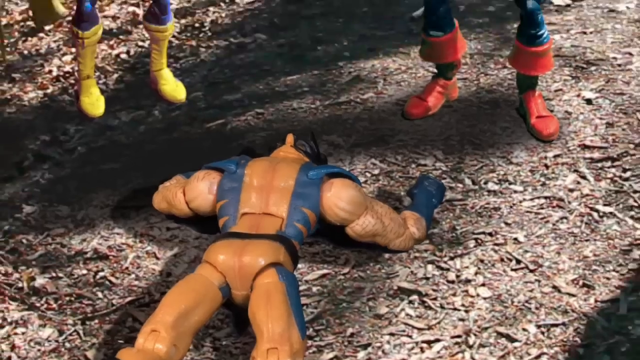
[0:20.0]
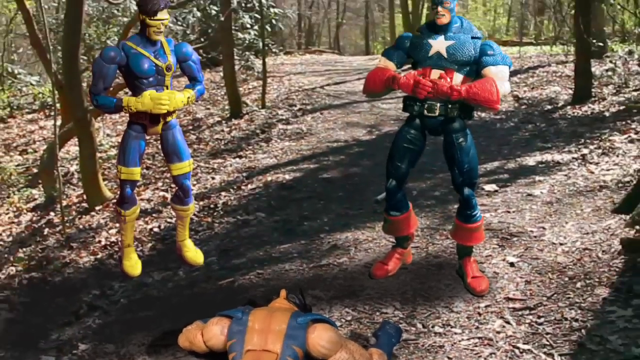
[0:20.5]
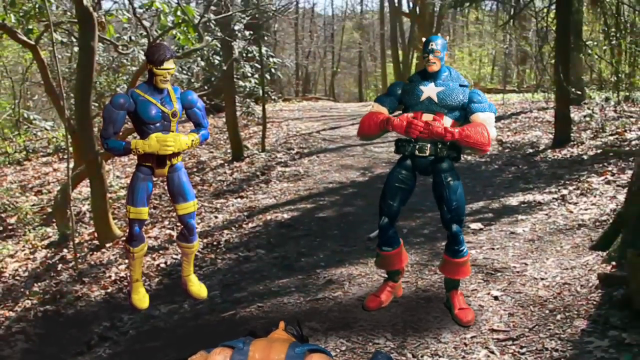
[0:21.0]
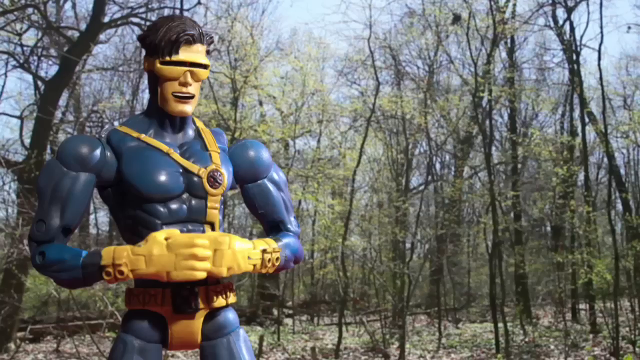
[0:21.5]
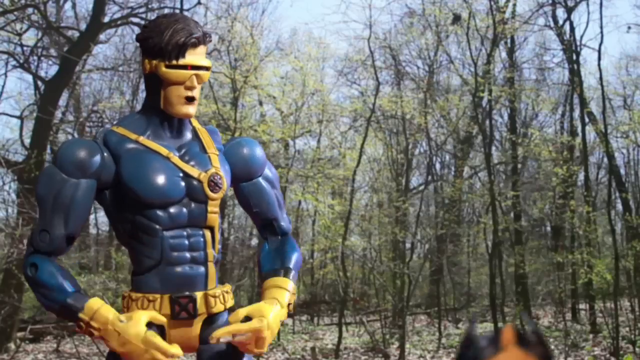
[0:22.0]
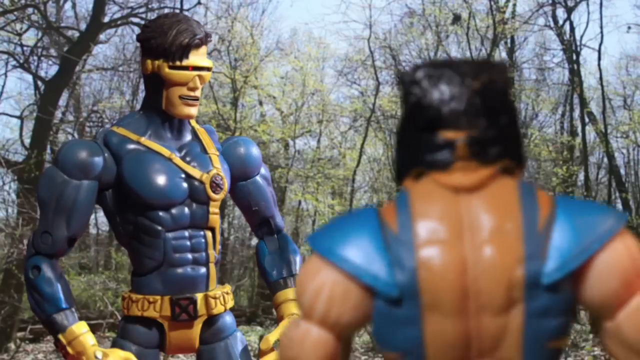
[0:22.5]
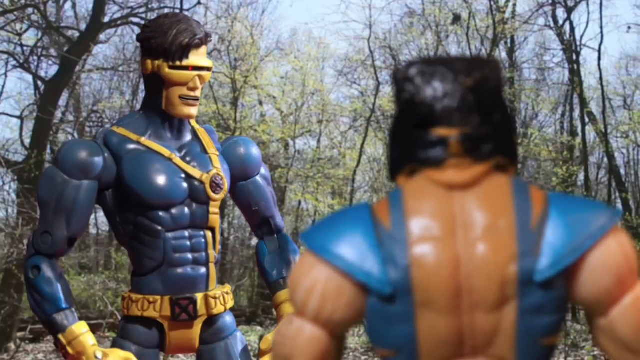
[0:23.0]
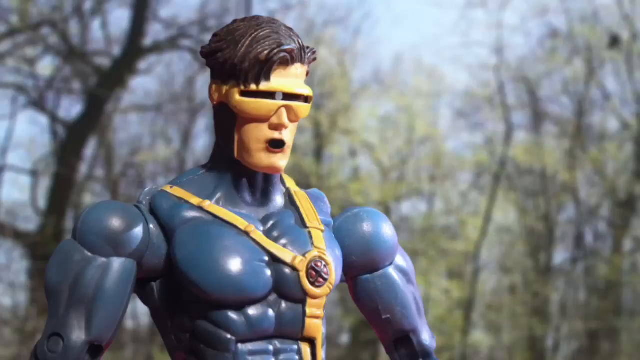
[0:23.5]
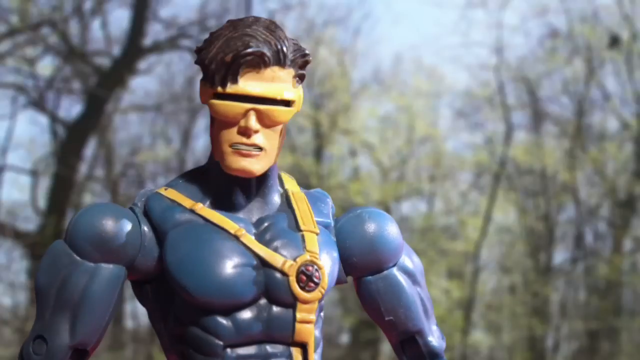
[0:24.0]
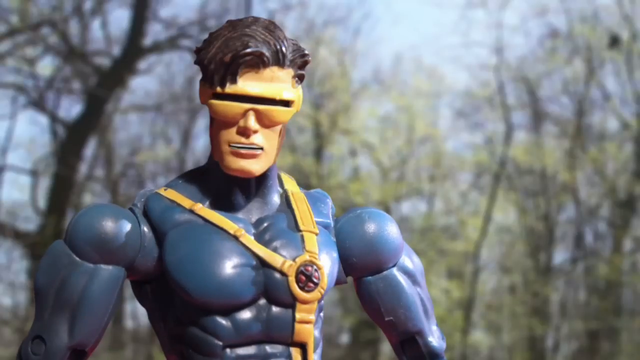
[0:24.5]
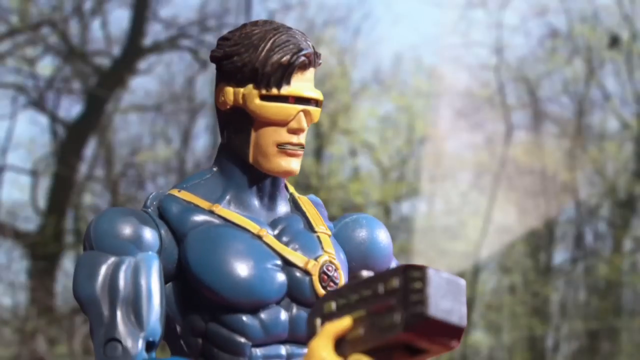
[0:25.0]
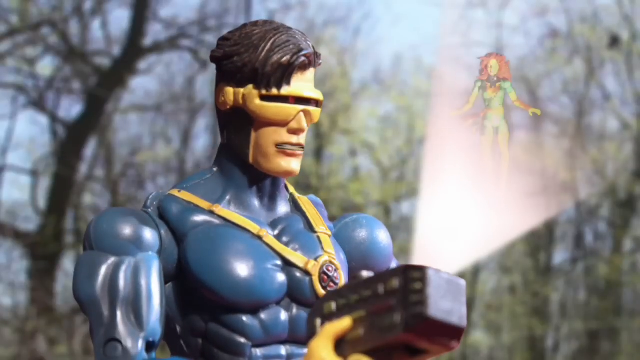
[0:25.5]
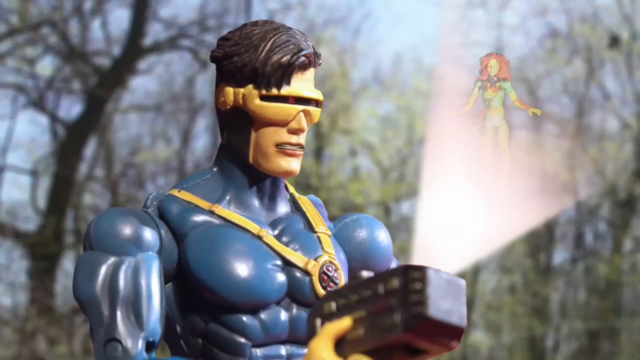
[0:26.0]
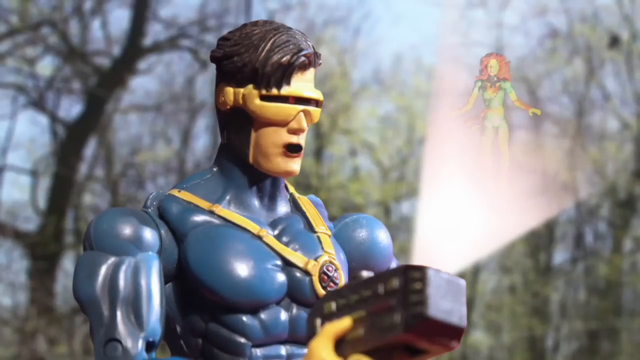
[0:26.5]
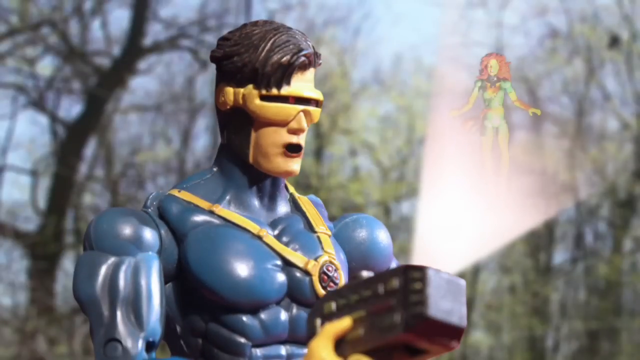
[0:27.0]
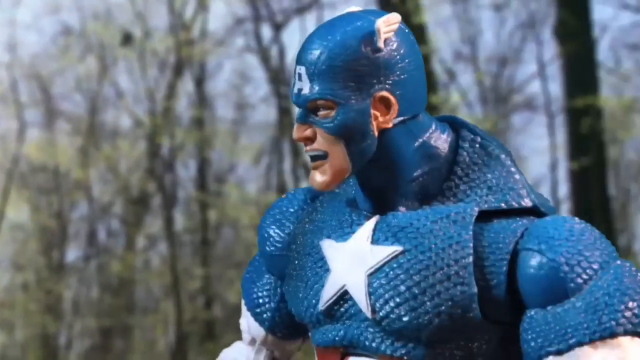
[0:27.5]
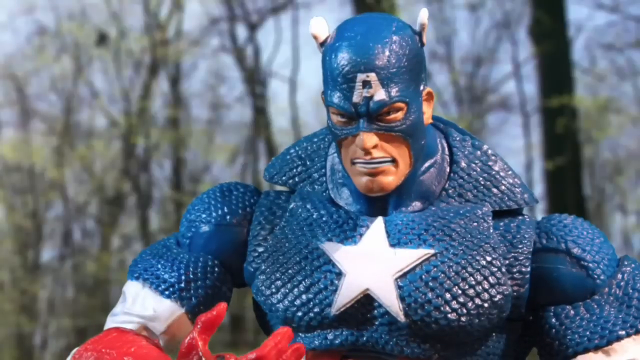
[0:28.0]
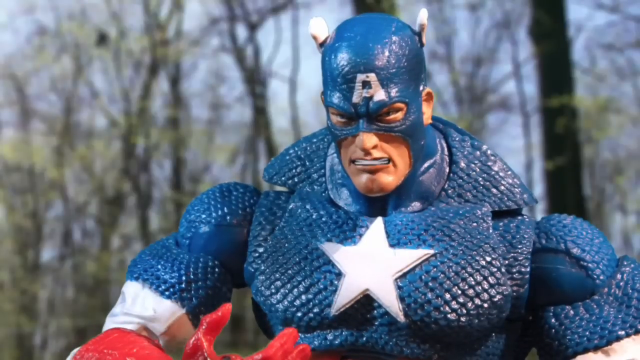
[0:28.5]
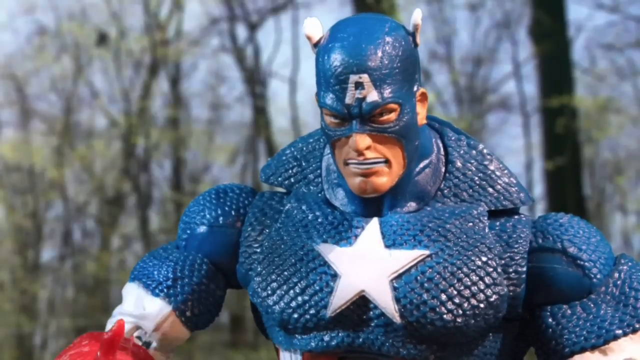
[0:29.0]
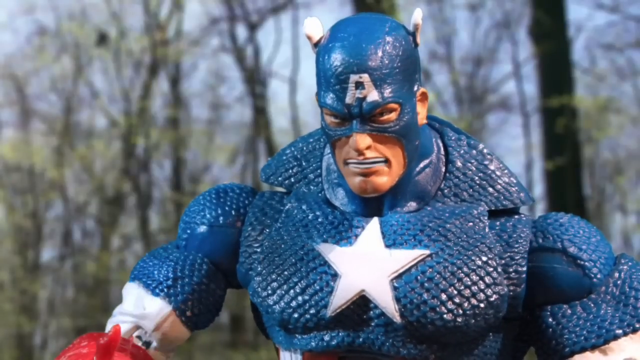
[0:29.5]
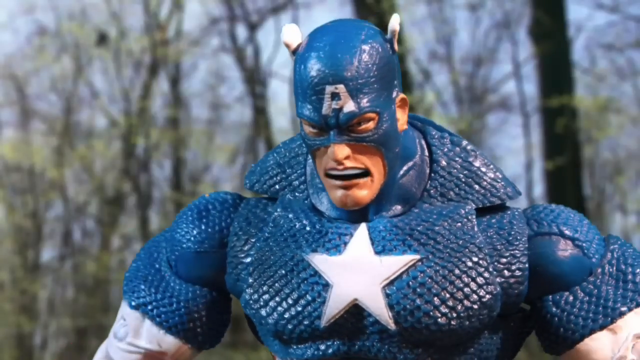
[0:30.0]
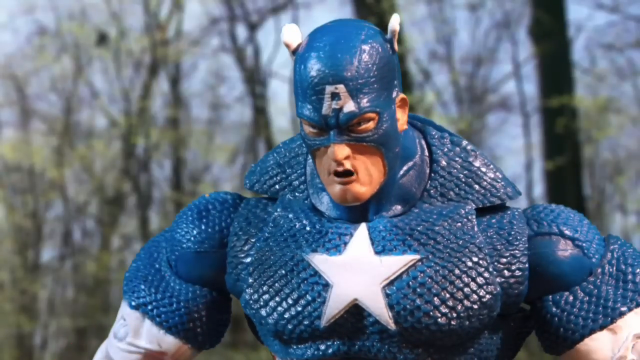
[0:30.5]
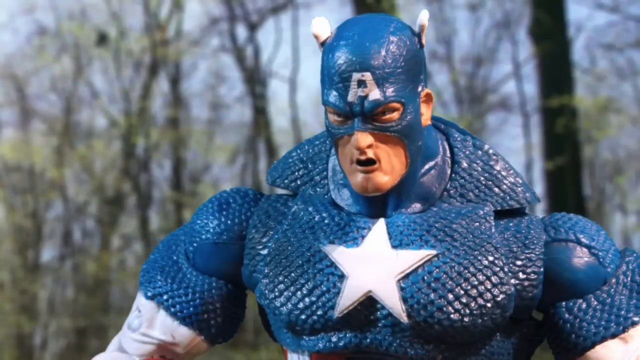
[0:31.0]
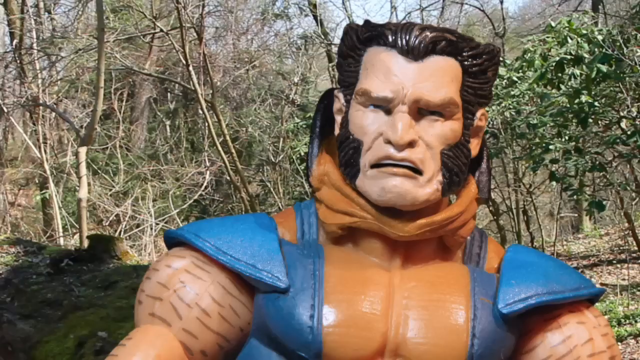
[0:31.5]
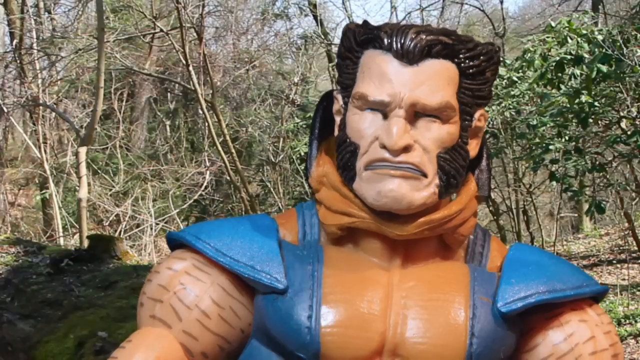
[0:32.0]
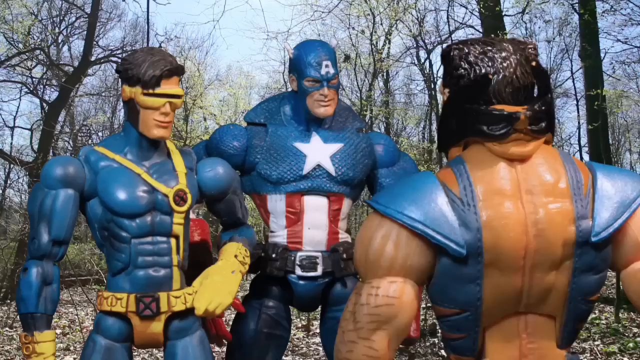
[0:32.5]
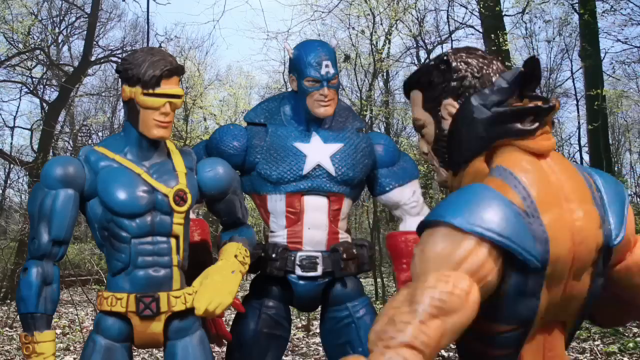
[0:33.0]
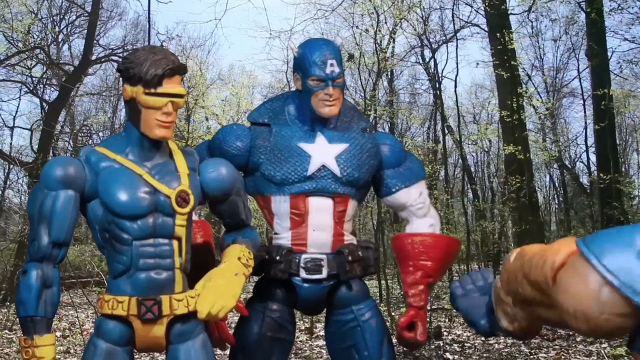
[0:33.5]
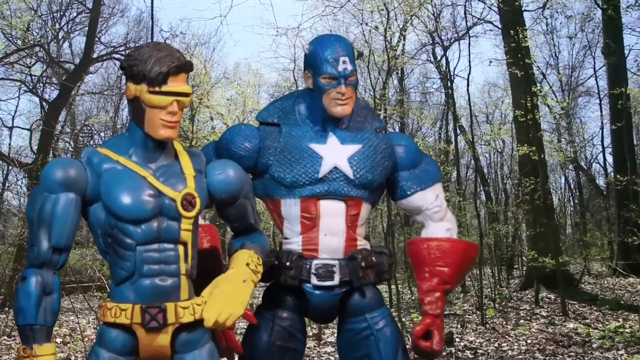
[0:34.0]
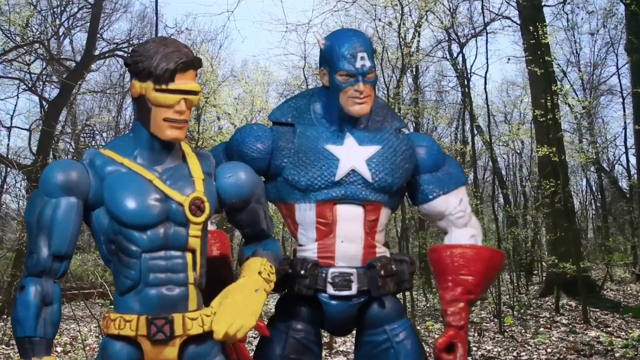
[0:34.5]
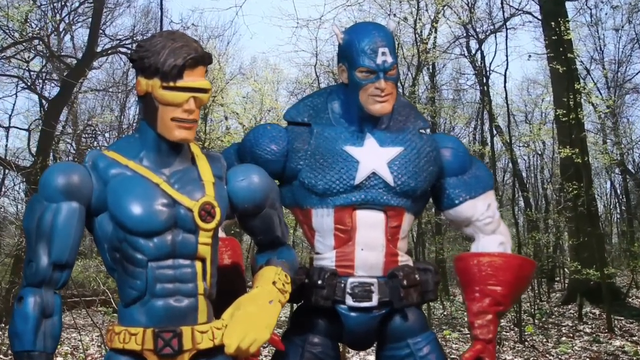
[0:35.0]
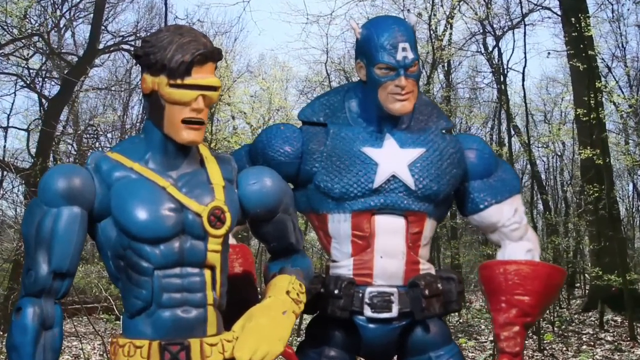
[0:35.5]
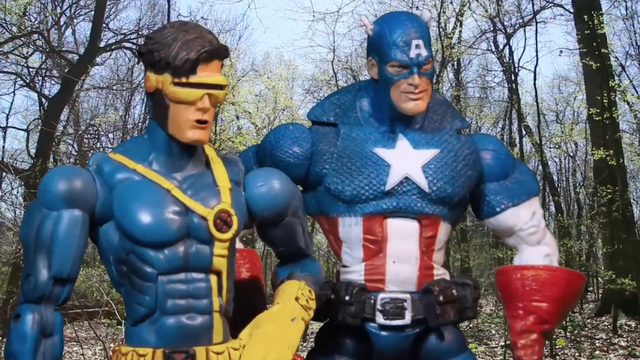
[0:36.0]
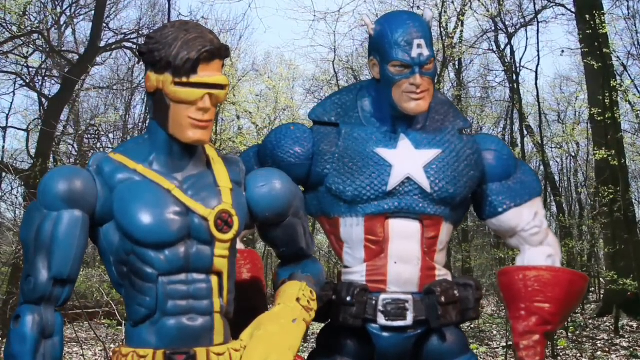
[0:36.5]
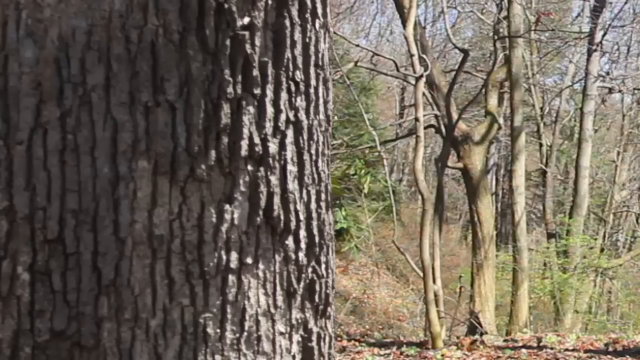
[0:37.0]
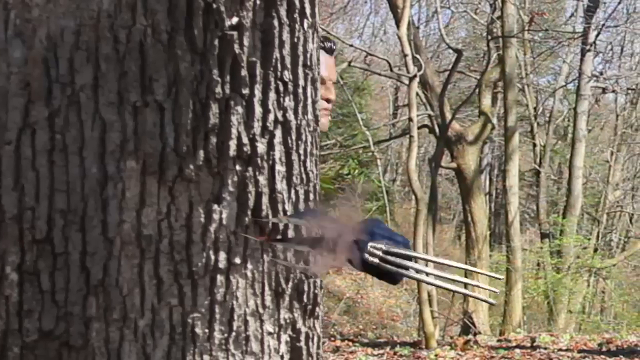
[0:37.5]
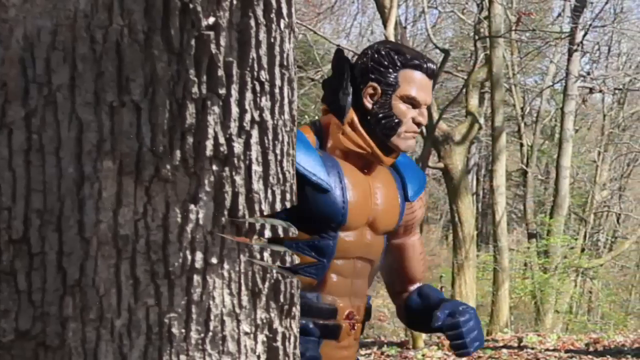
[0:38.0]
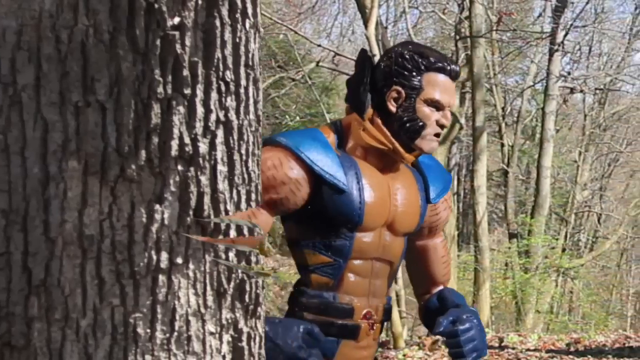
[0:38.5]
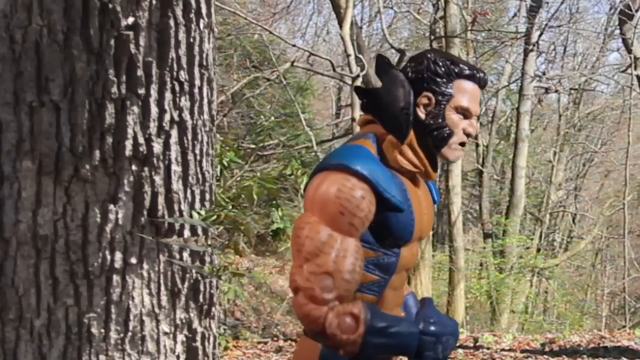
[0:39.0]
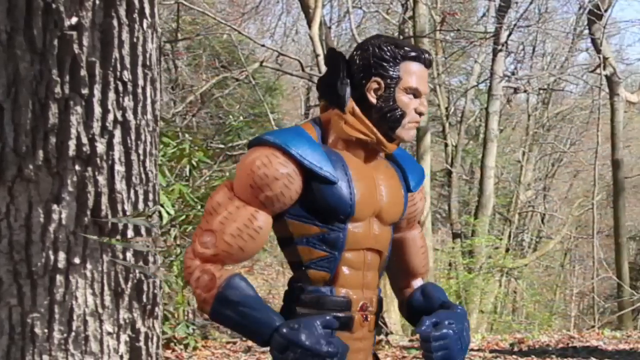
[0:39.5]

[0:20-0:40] Three little plastic Marvel figures with big muscles appear. One has a blue body and a yellow medallion around his neck; he is shining a light, like a projector, that projects a female superhero with red hair. Another is a blue guy with a big star on his chest, huge muscles and what looks like a textured outfit. The third has a skin-colored body and a blue collar. They talk amongst themselves in a real forest. One has cut a tree into slices in the middle. The skin-colored one, the character who had fallen to the ground earlier, starts to walk away from the other two.